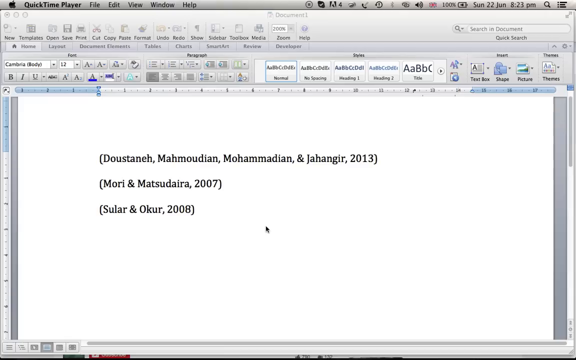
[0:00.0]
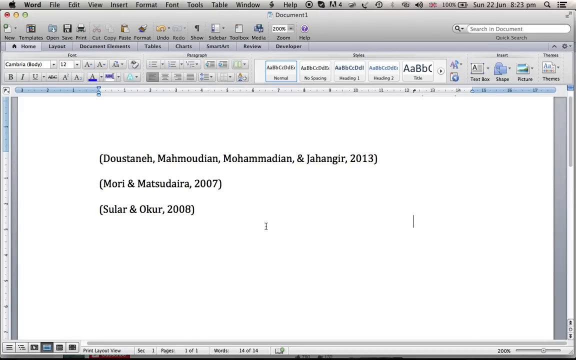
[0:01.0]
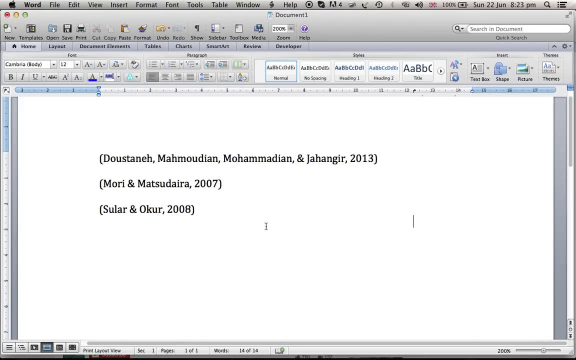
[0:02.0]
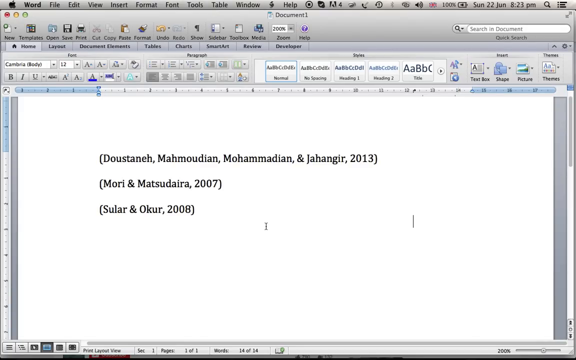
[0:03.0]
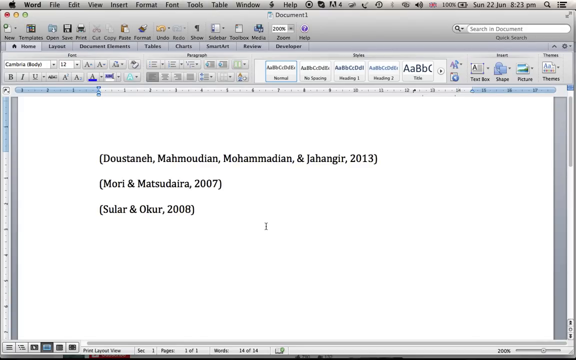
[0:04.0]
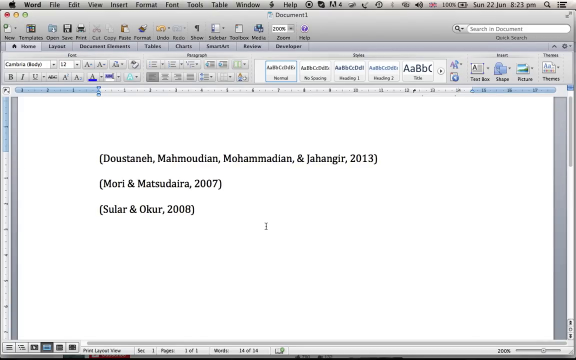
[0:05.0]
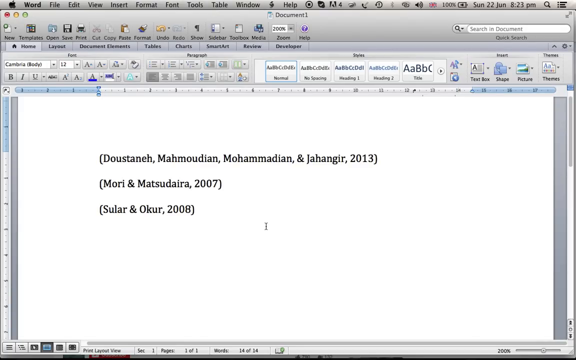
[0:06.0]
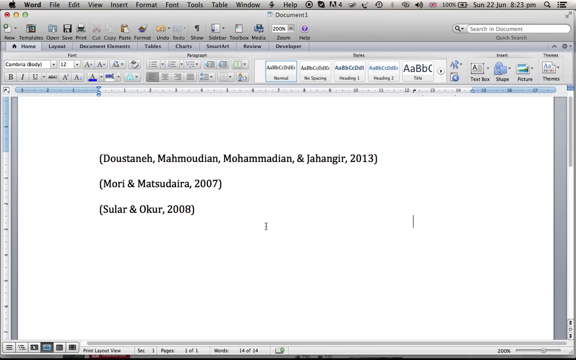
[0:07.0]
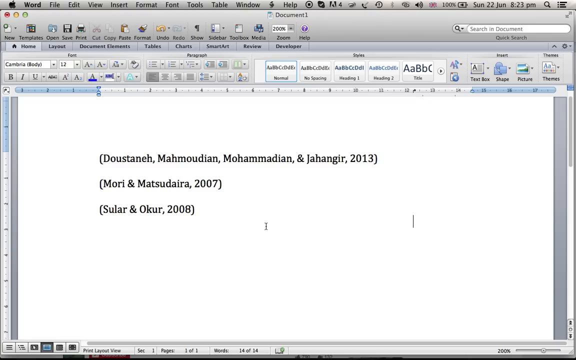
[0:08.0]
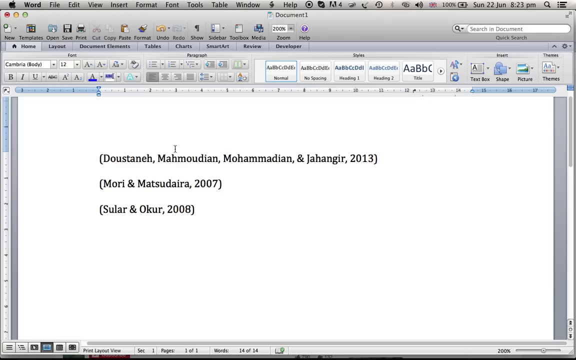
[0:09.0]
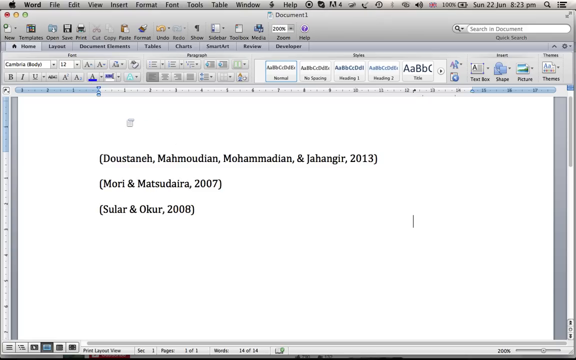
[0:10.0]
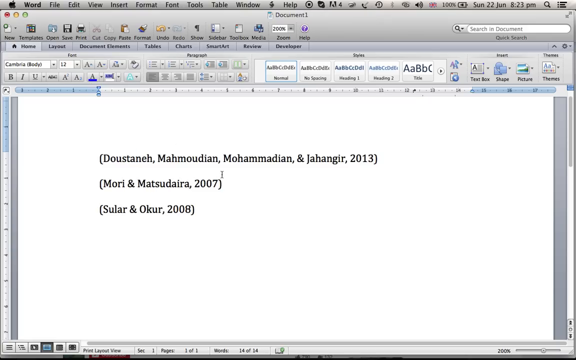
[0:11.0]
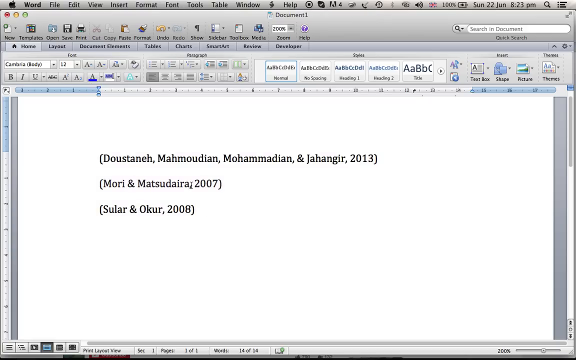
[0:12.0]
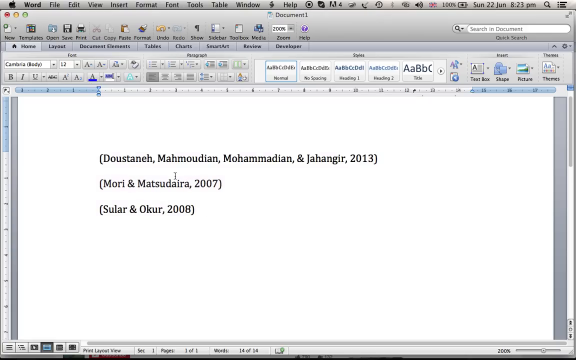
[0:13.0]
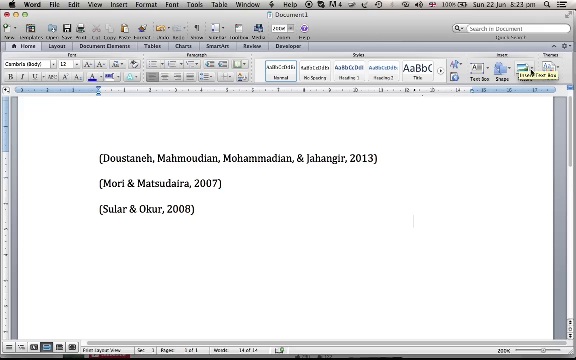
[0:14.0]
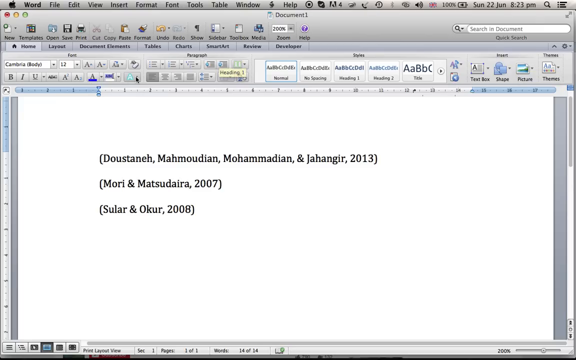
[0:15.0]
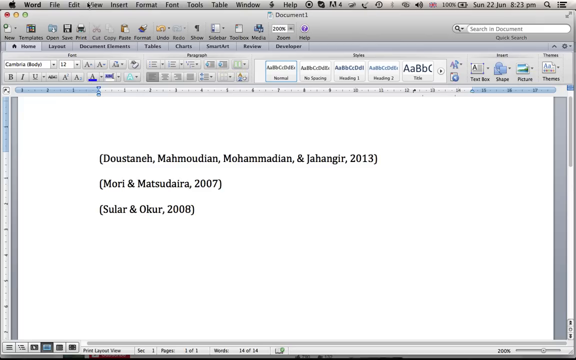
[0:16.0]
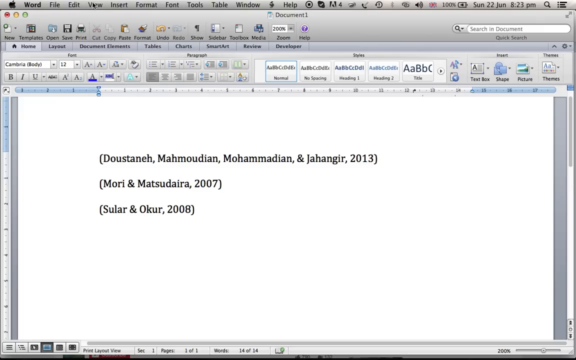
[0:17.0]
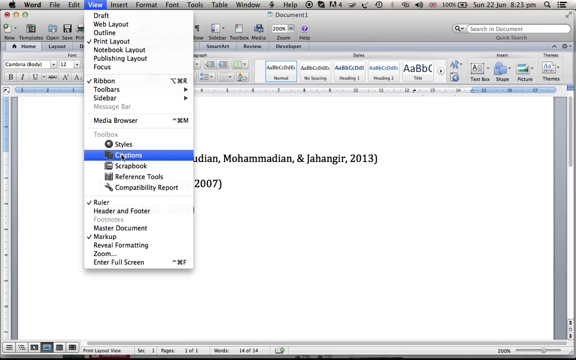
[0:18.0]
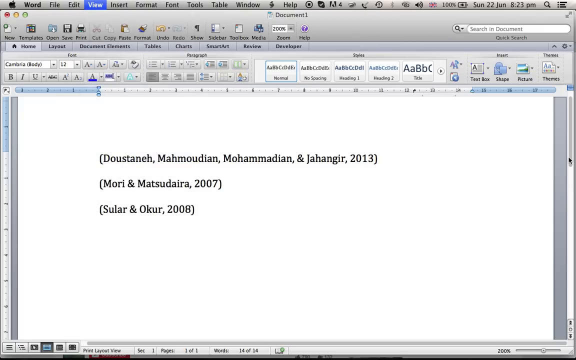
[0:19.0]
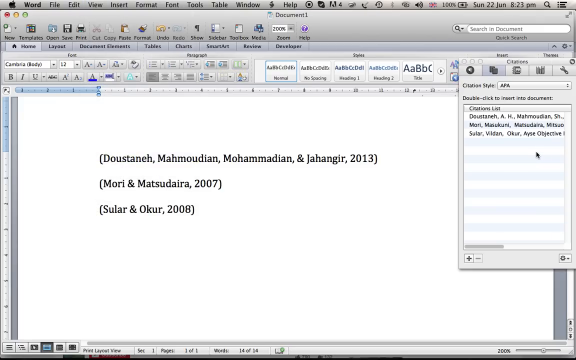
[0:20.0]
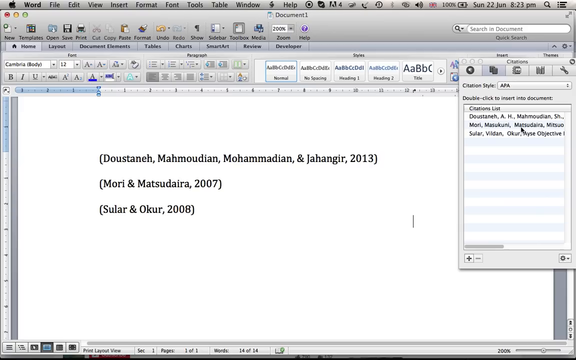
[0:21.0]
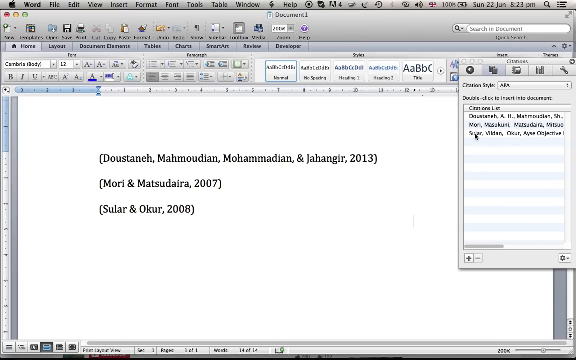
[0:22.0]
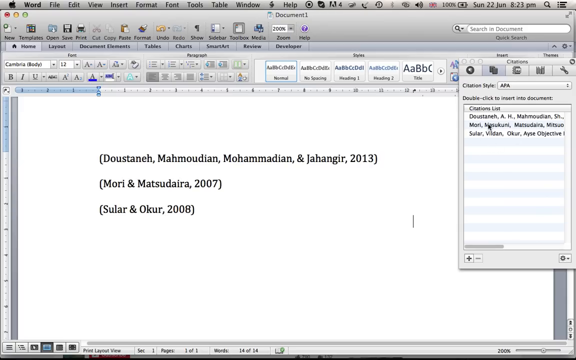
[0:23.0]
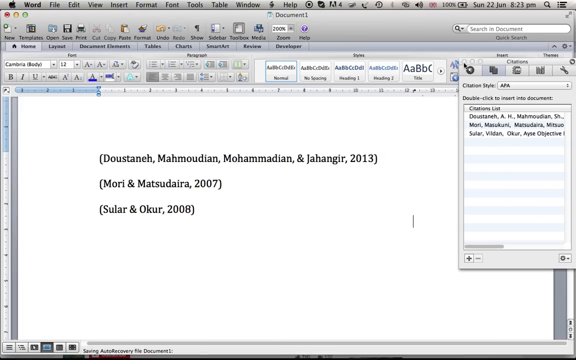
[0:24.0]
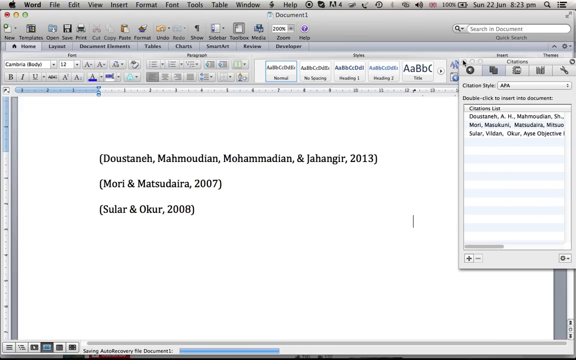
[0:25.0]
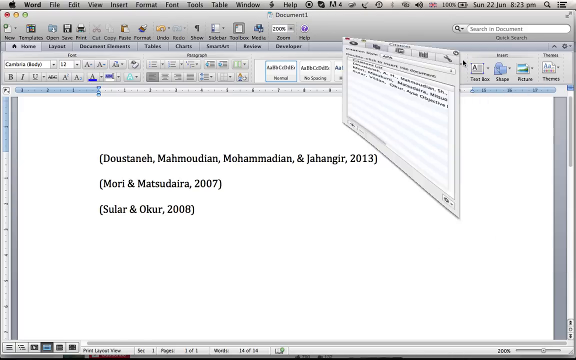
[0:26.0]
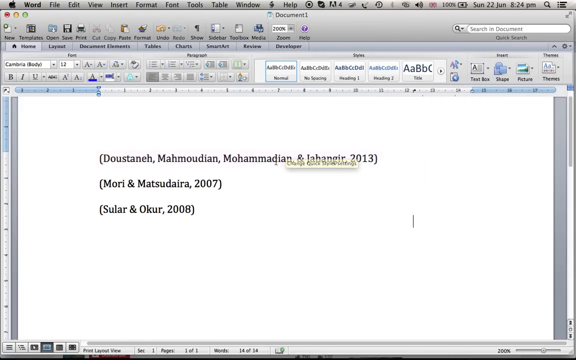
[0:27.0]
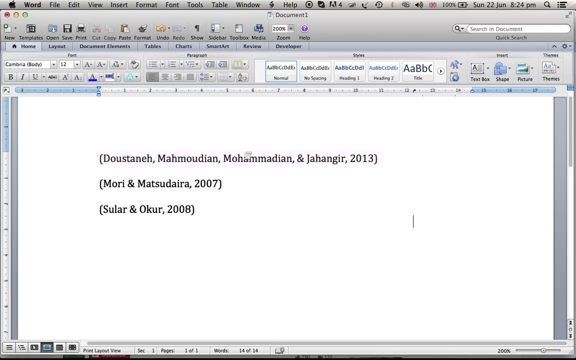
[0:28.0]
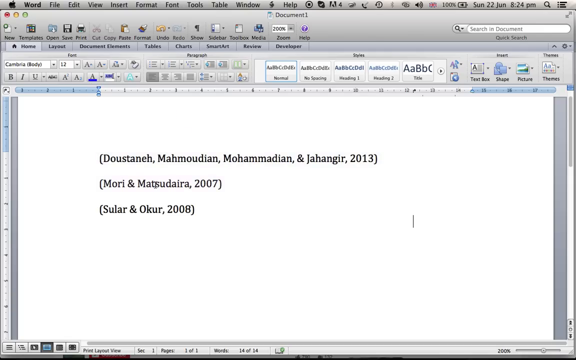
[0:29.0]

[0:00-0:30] A laptop is open, with a Word document open in the background. The font in use is shown as Cambria body Arial, size 12, and some text is typed in the document. A small line on the laptop screen moves. The person moves the cursor, goes to View, presses Captions, and then presses Citations. The person is showing how to make citations appear in a Word document.